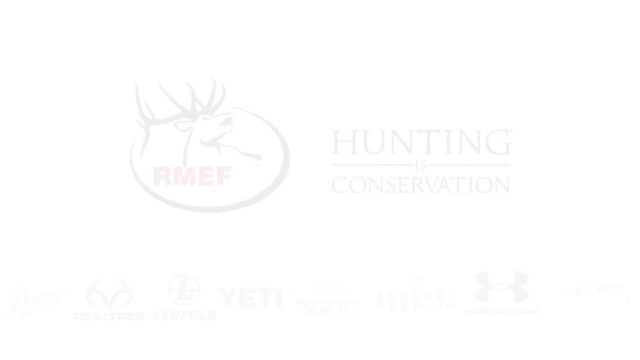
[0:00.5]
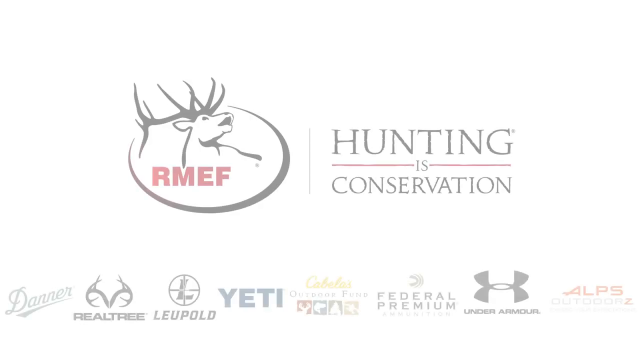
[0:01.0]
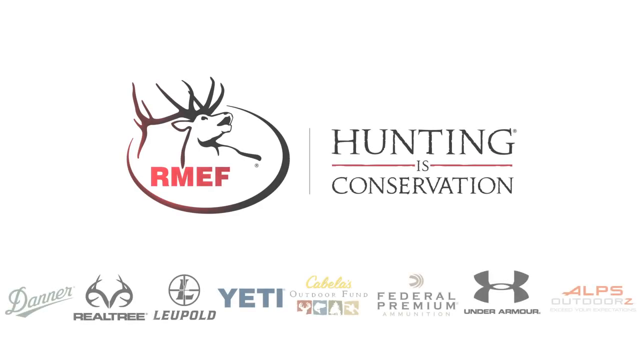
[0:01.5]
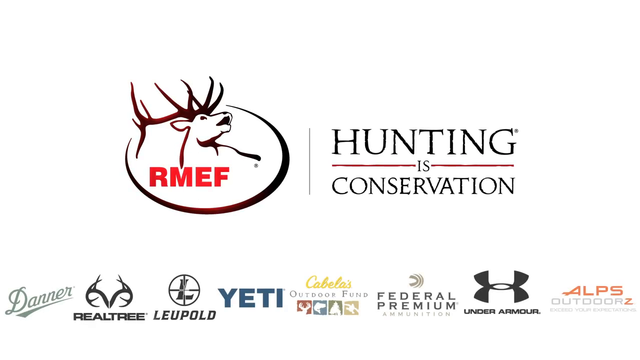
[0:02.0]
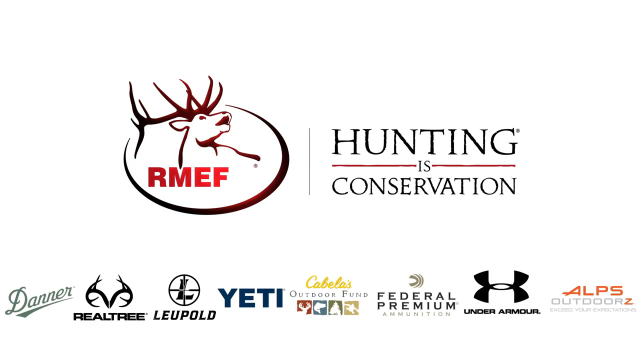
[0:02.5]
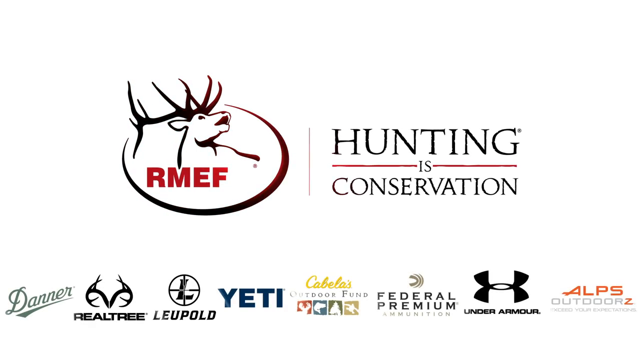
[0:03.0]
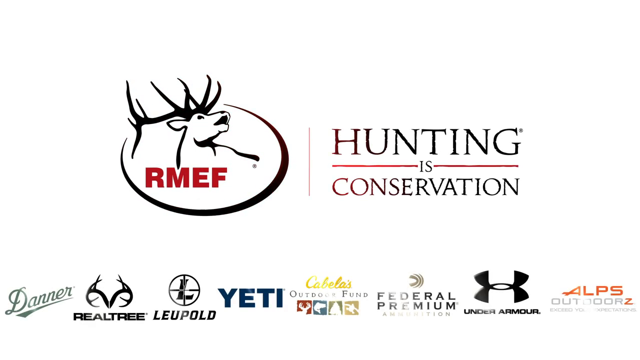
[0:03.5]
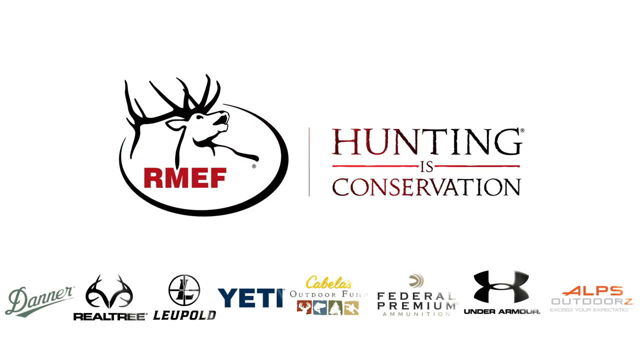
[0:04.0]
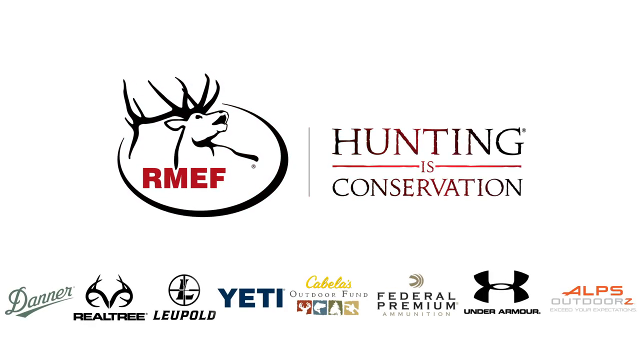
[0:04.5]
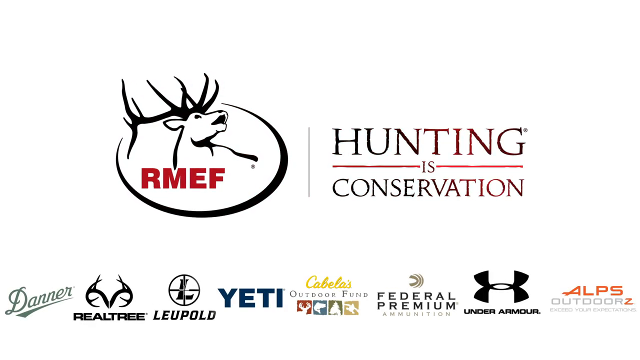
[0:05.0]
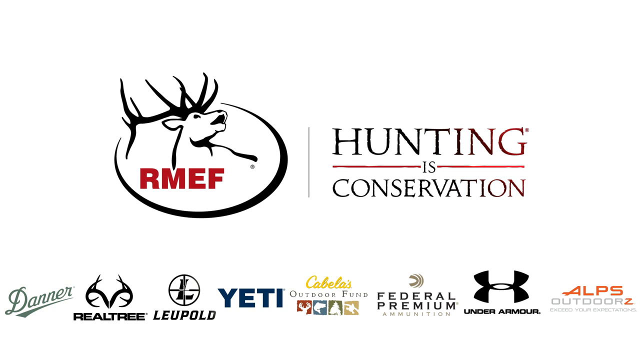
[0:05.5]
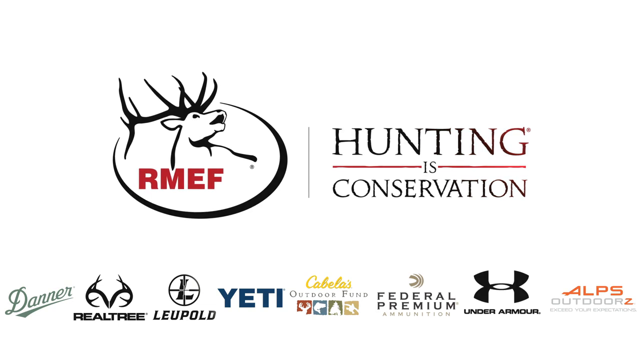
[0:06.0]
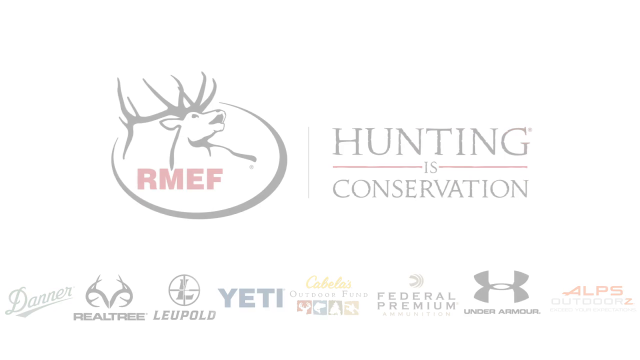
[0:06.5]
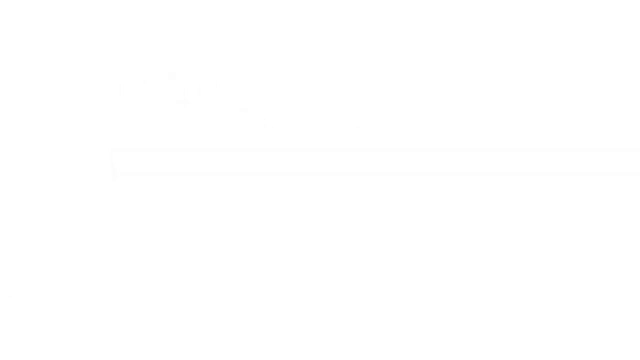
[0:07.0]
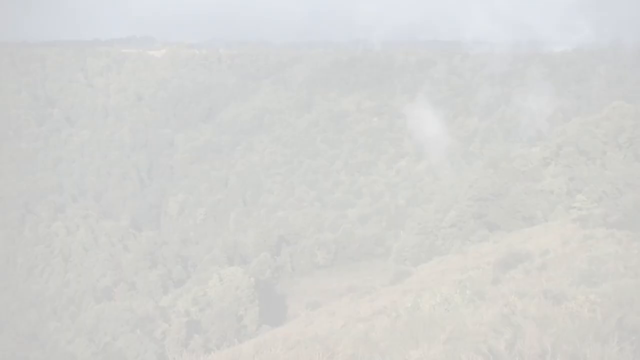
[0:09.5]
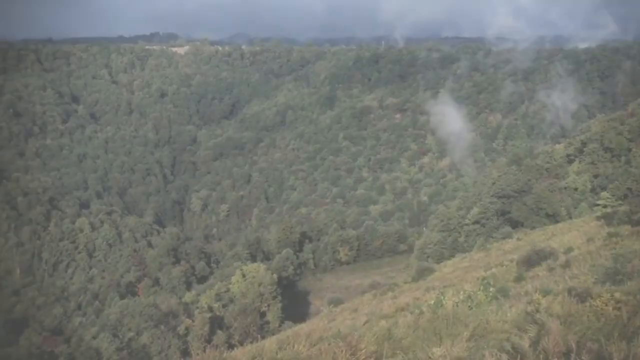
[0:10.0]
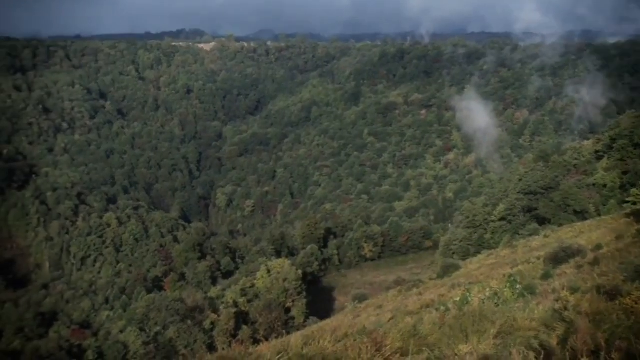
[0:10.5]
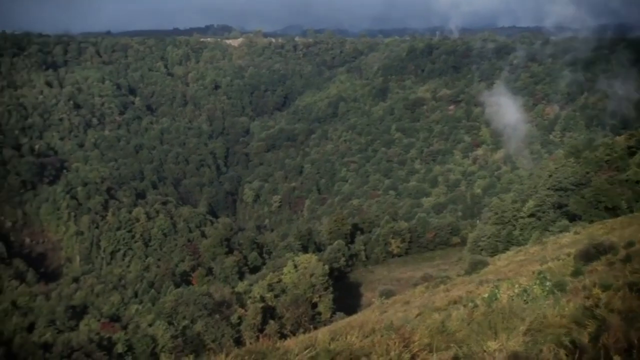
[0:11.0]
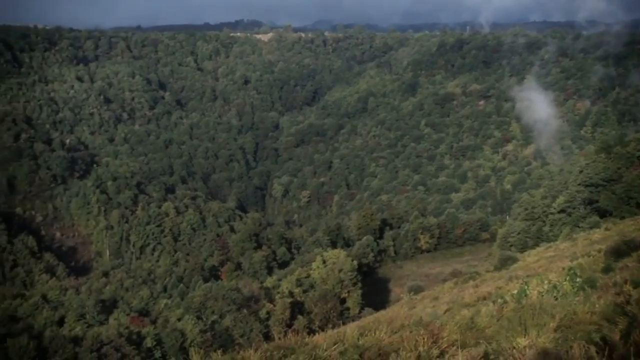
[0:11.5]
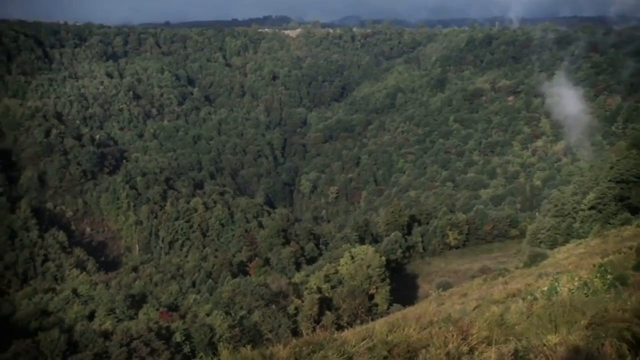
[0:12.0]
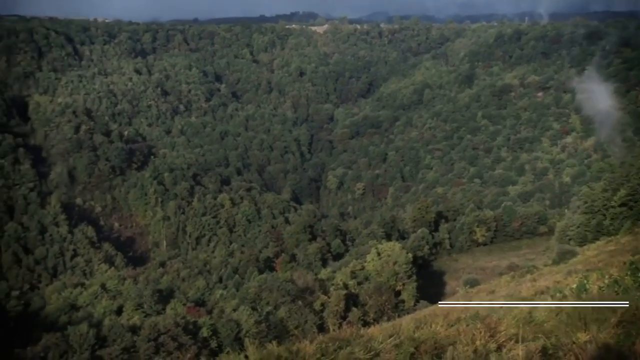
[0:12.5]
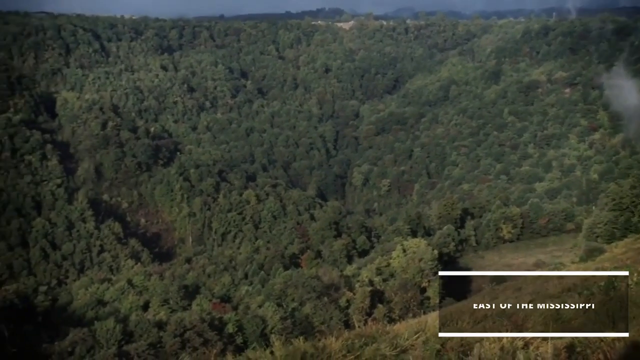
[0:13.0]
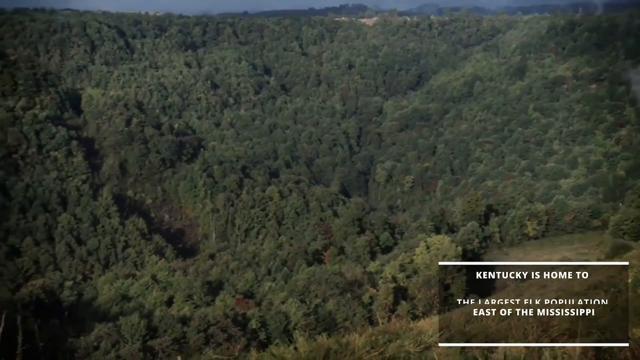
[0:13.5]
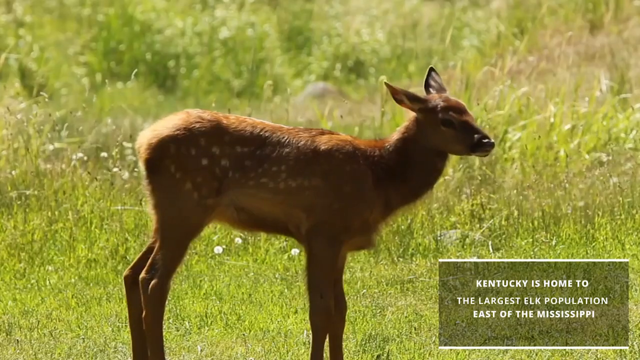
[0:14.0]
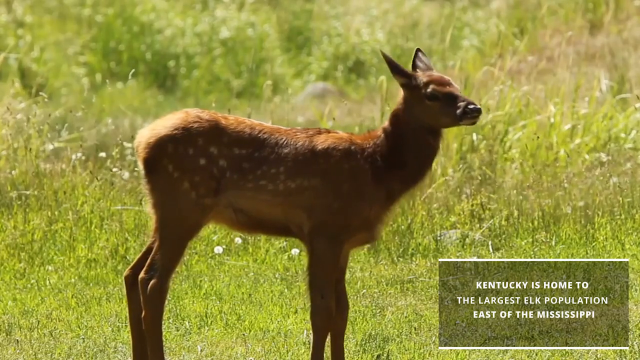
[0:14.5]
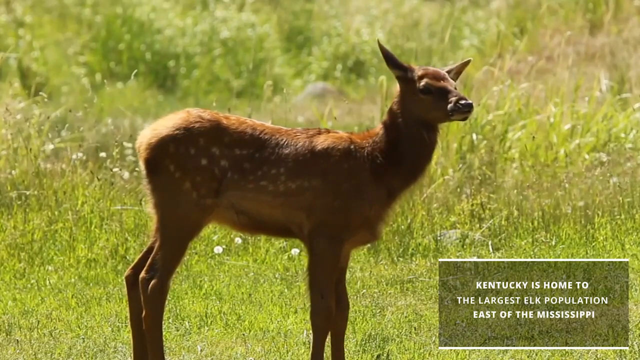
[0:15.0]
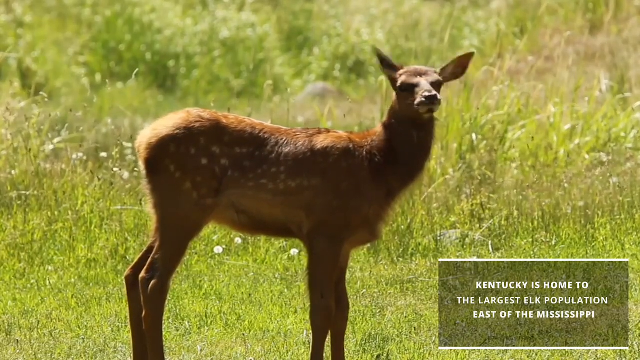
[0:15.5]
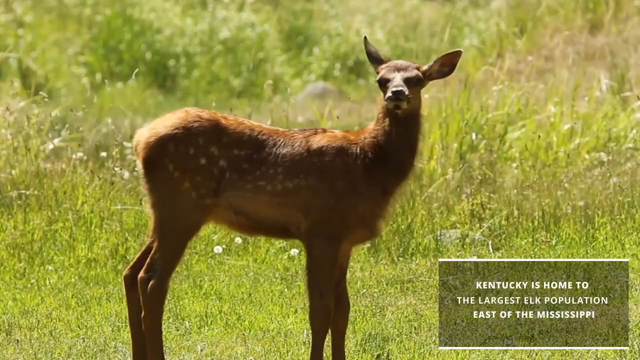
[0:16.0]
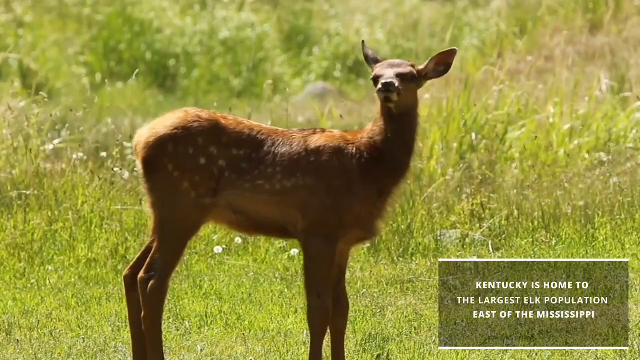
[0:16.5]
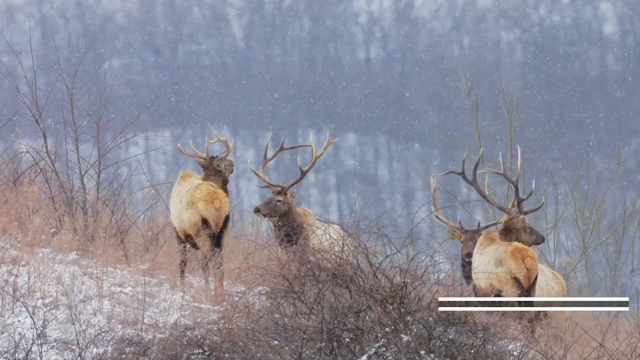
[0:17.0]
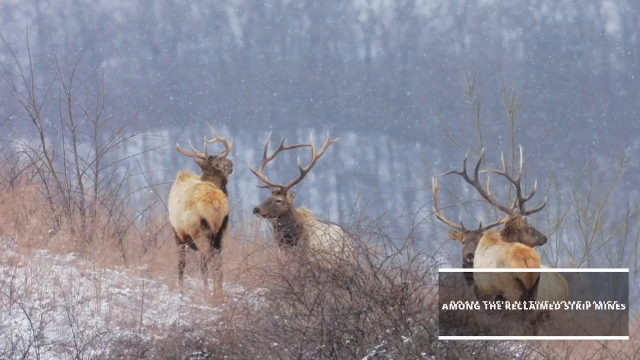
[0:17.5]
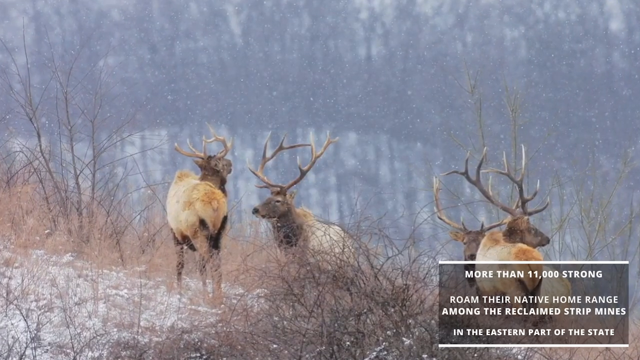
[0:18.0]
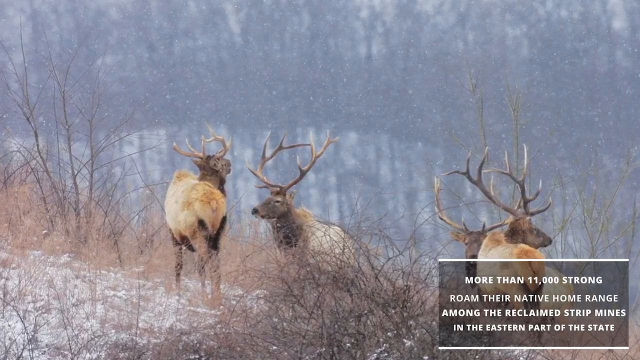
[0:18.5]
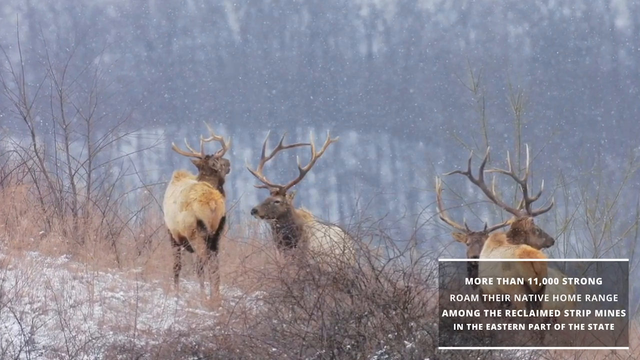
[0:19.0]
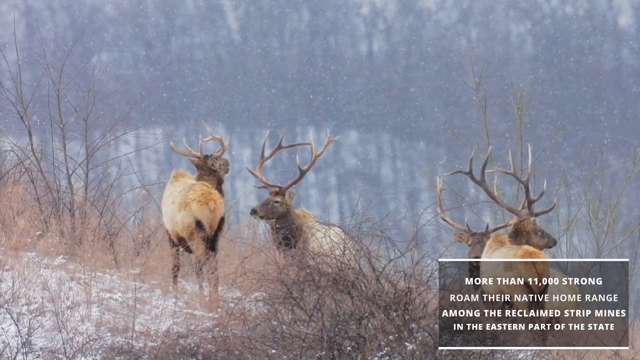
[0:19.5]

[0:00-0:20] The video opens on a logo: a stylized deer with the letters RMEF below it. Text to the right reads "Hunting is Conservation", and below are a number of company logos, such as Yeti, Under Armour, and more. This changes to a solid white screen, which then shows a forest with a large number of trees as the camera pans over it. A banner comes in at the bottom right with white text reading "Kentucky is home to the largest elk population east of the Mississippi". An image follows of what appears to be a young elk with brown fur and white spots, looking around as it stands in a grassy area. The video then cuts to a static image of a number of elk standing in some bushes, each with large antlers on its head; there appears to be snow in the air. Text in the bottom right reads "More than 11,000 strong roam their native home range among the reclaimed strip mines in the eastern part of the state."